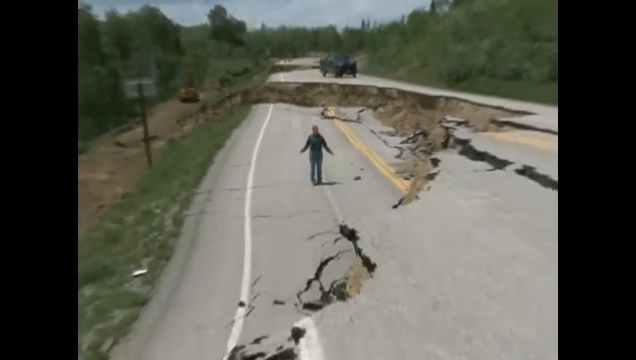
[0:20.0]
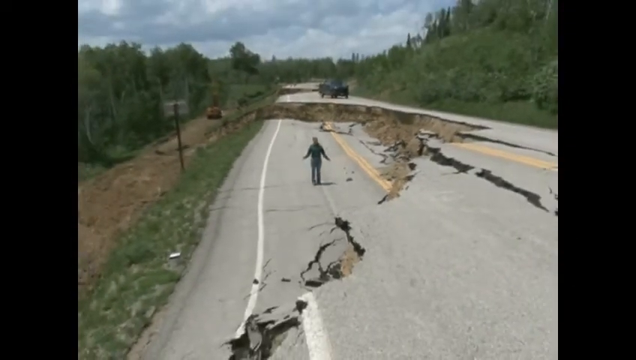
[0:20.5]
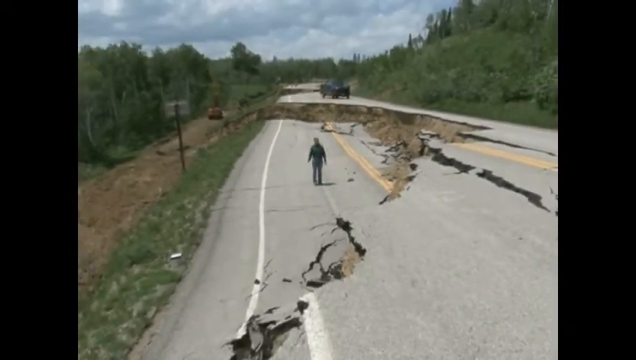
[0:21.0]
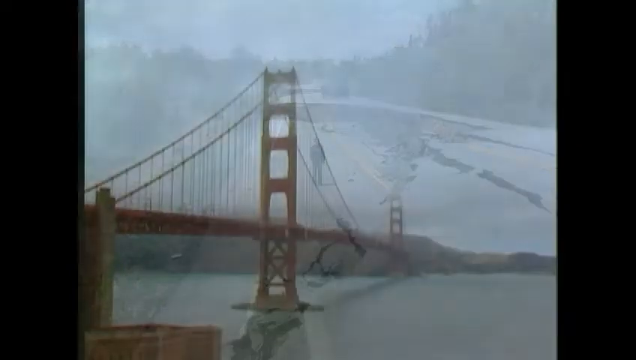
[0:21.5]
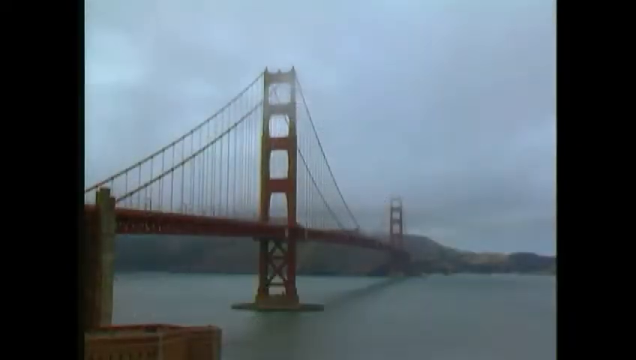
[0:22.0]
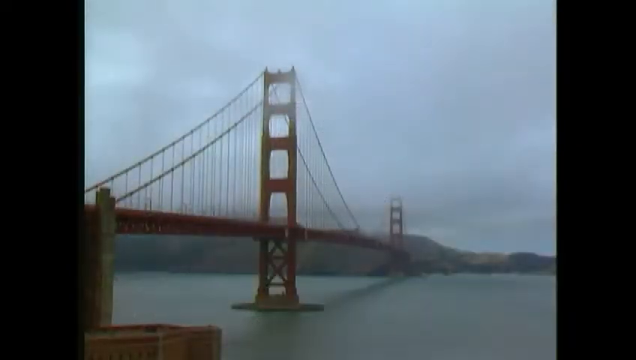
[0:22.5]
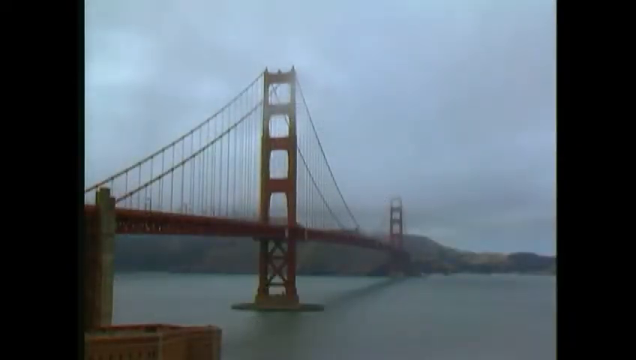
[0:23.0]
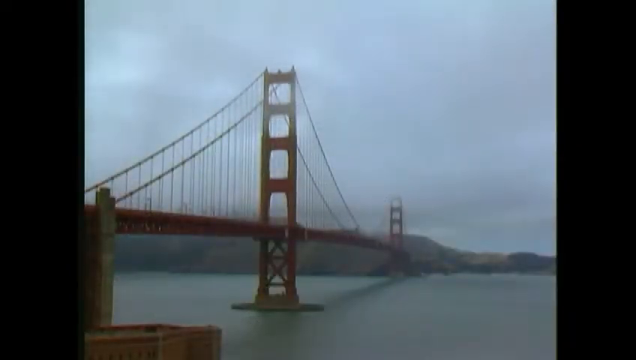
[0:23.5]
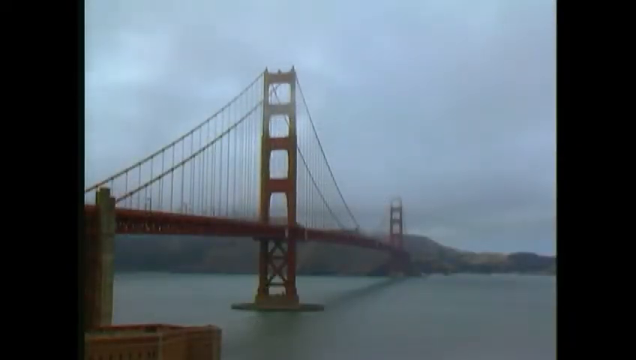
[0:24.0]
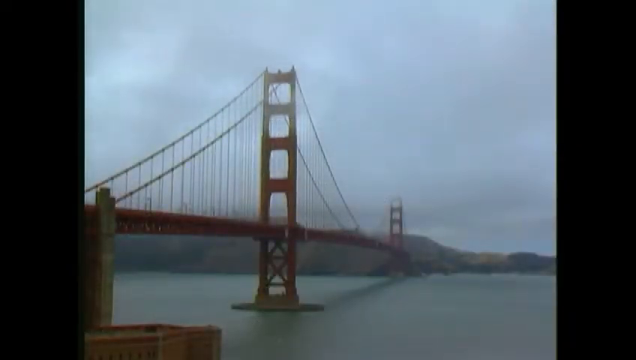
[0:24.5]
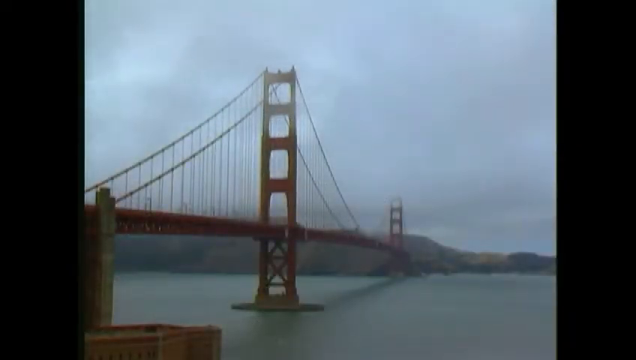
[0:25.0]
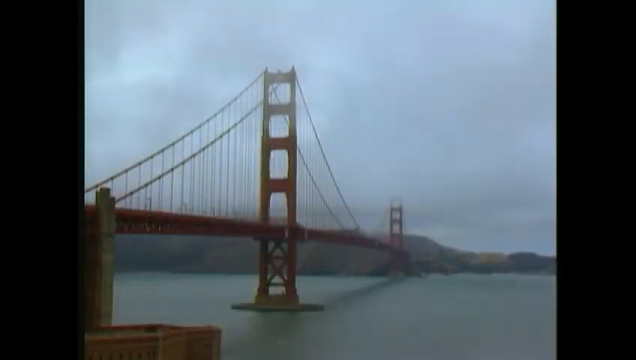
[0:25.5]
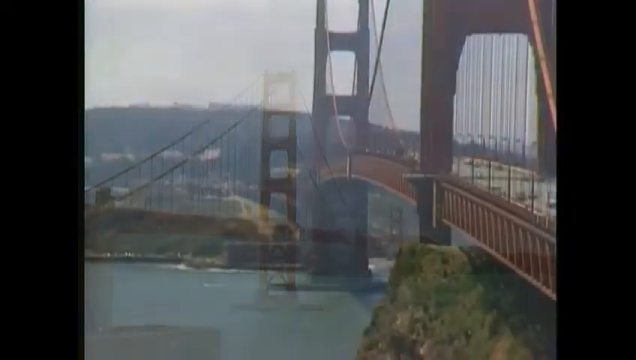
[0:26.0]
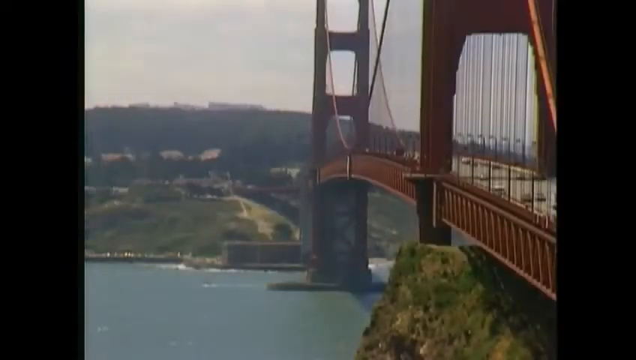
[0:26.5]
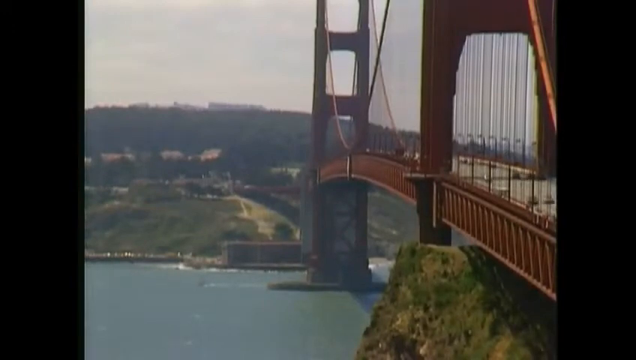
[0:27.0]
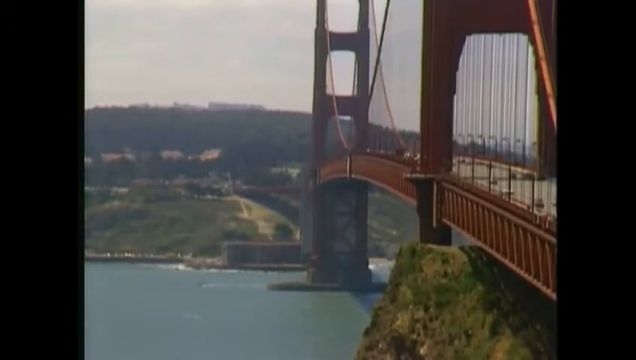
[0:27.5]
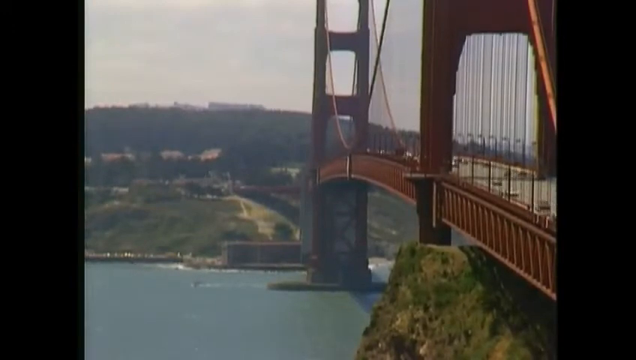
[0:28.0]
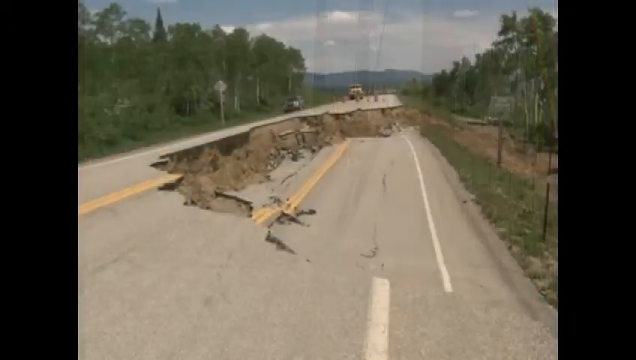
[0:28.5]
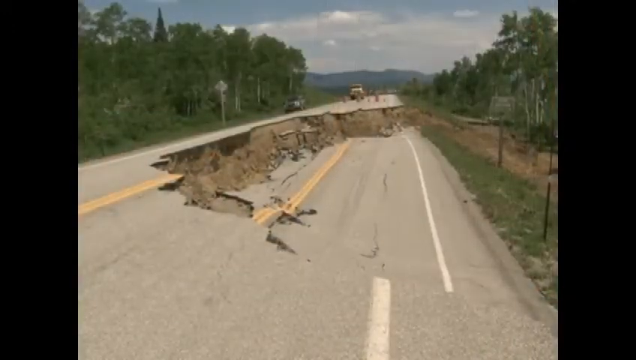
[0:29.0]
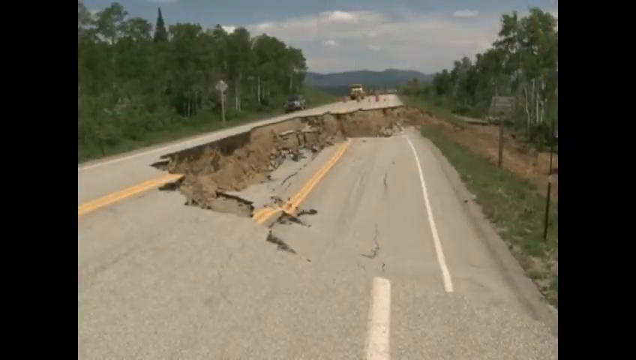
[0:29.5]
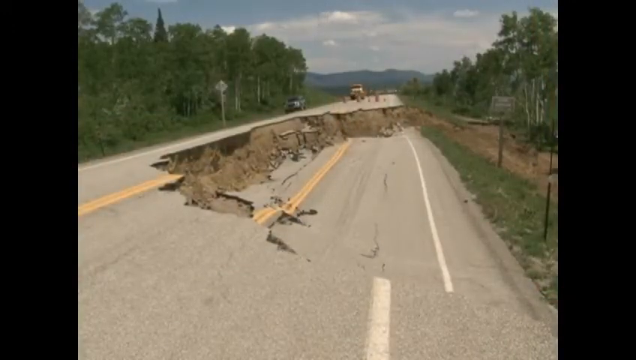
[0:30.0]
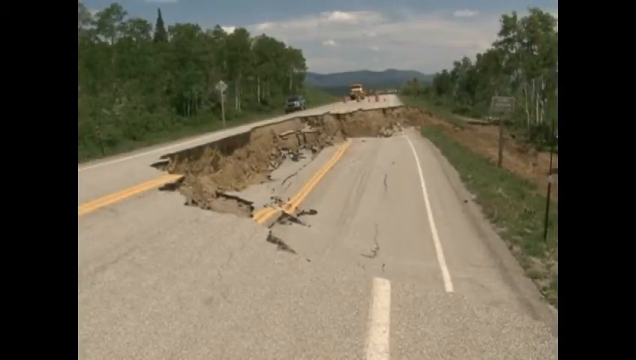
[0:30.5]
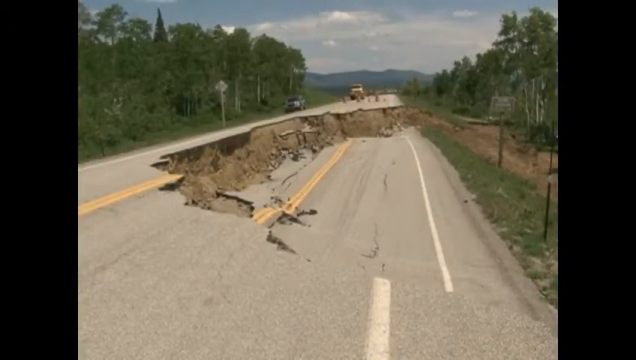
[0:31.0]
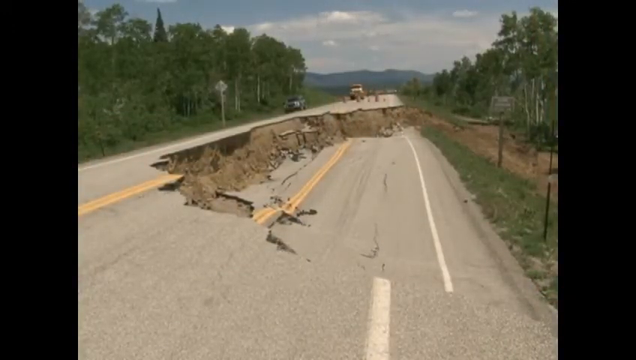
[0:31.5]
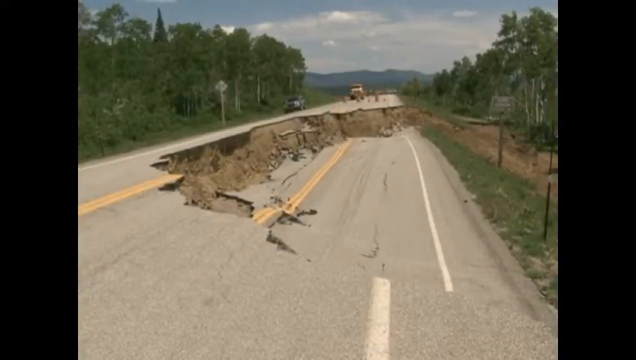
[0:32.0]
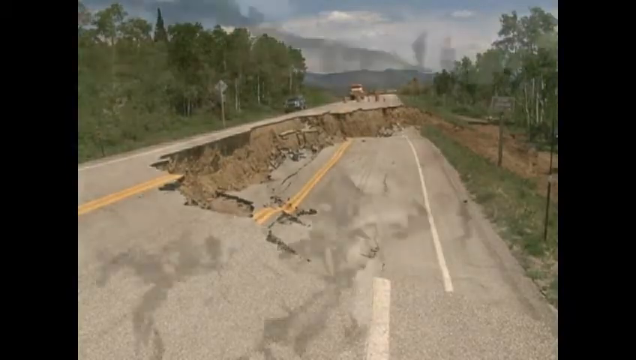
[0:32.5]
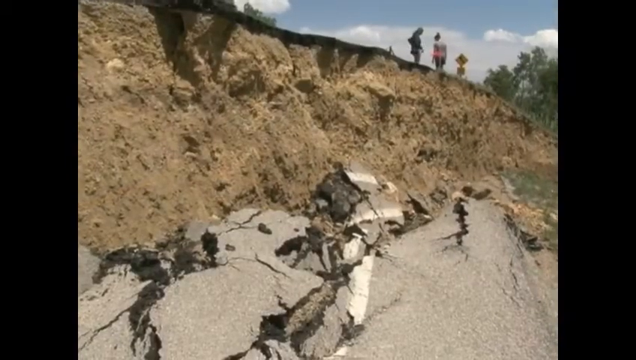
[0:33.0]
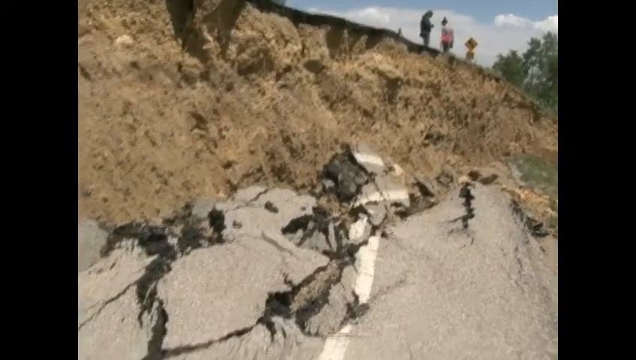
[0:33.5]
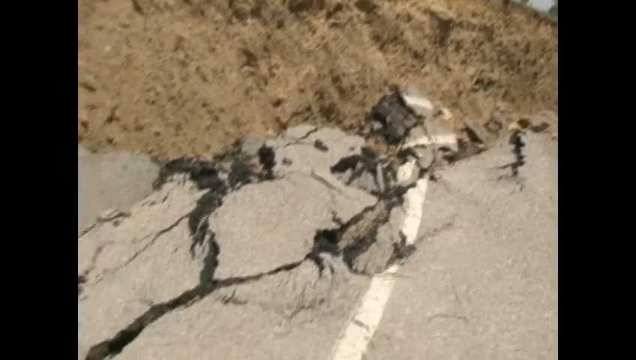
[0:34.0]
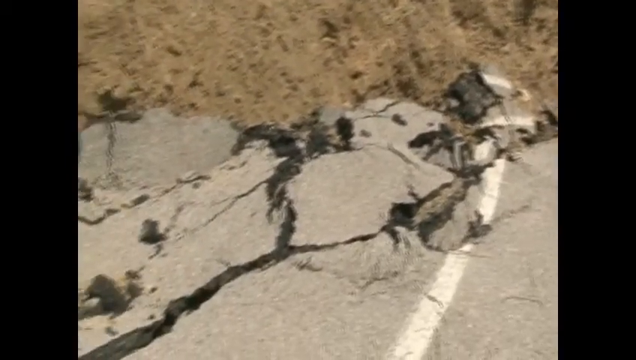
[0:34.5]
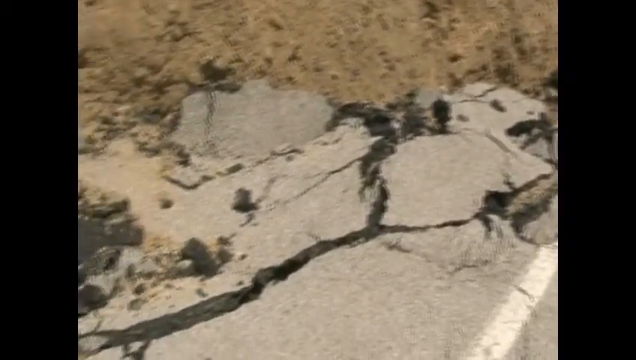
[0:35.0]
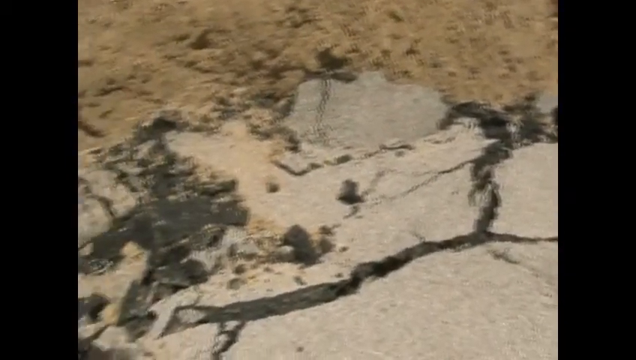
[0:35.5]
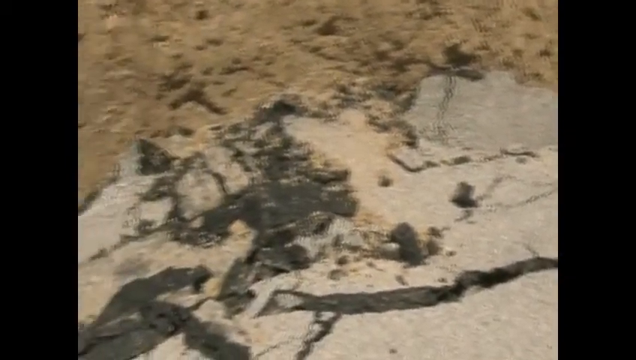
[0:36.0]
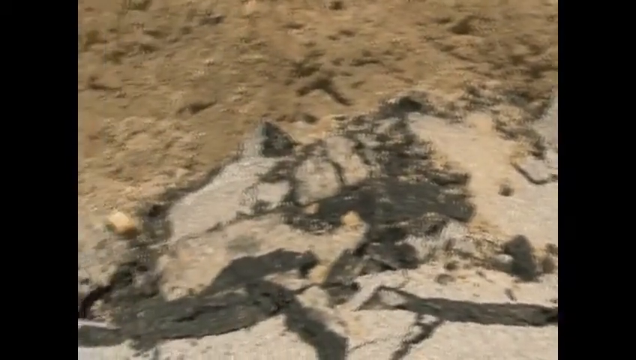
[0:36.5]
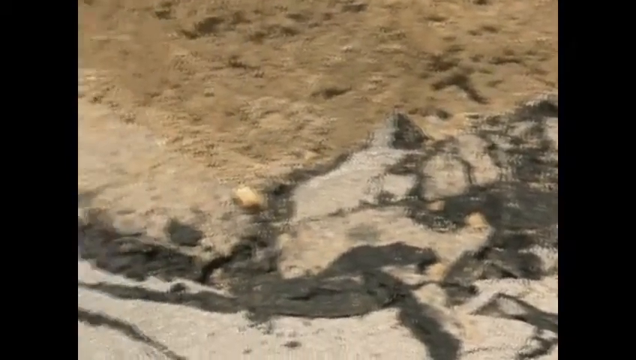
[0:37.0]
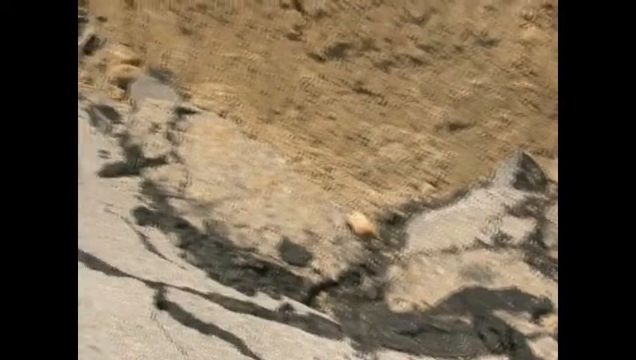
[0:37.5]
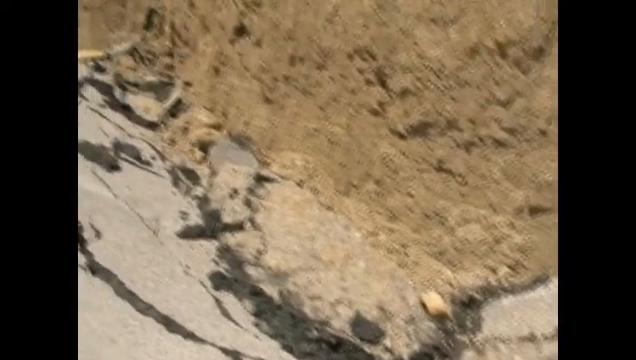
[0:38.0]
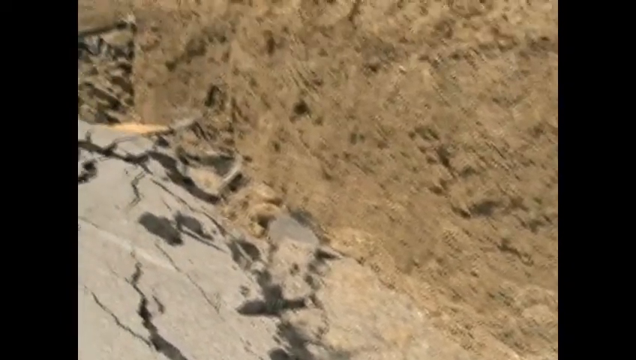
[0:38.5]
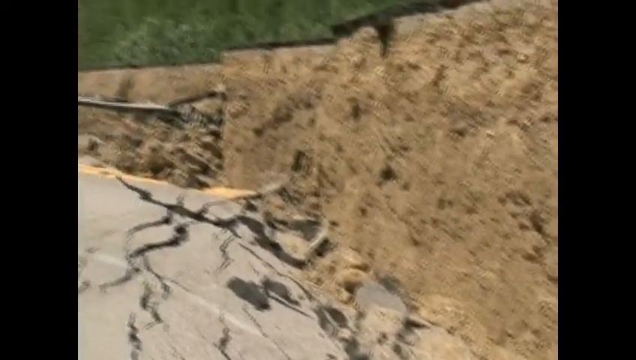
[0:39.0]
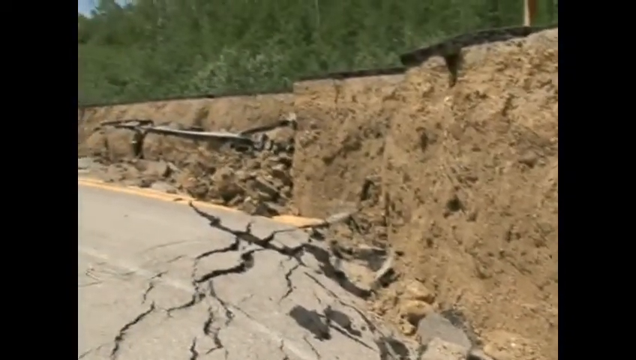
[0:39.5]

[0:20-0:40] The woman in the green shirt and blue jeans is standing on a two-lane road that has erosion damage, with a gigantic crack or crevice in it, and the road is quite torn up. Farther down the road, in another section, there looks to be even more erosion and breakage of the road. A vehicle is down on the left, on what looks like a side area. The camera zooms out, and then there are various shots of what appears to be the Golden Gate Bridge, a giant suspension bridge. The video then returns to shots of asphalt falling off the side of the road.